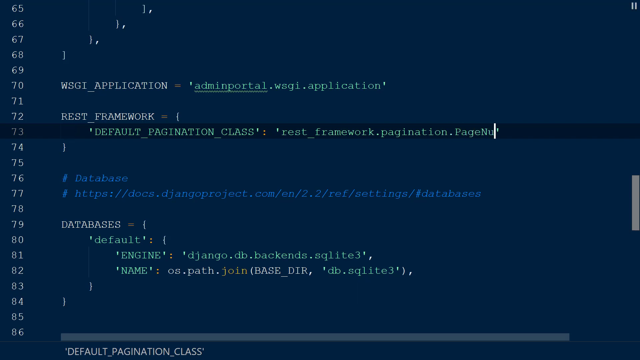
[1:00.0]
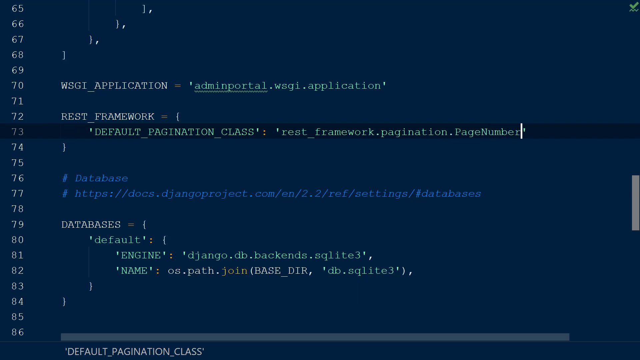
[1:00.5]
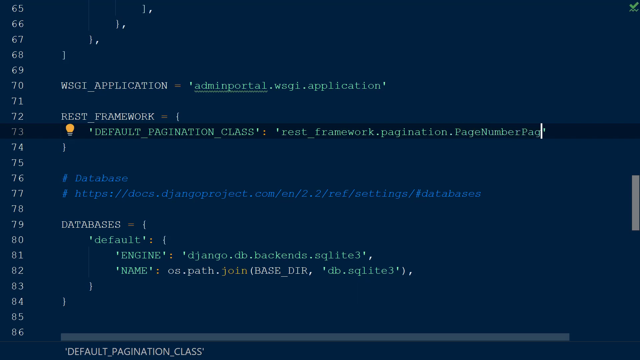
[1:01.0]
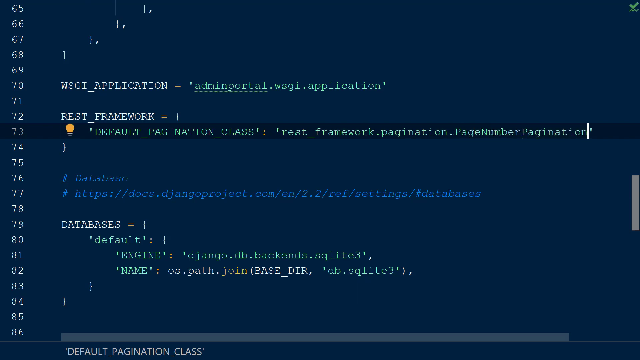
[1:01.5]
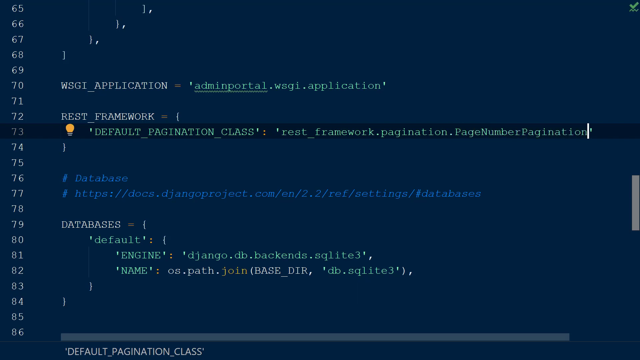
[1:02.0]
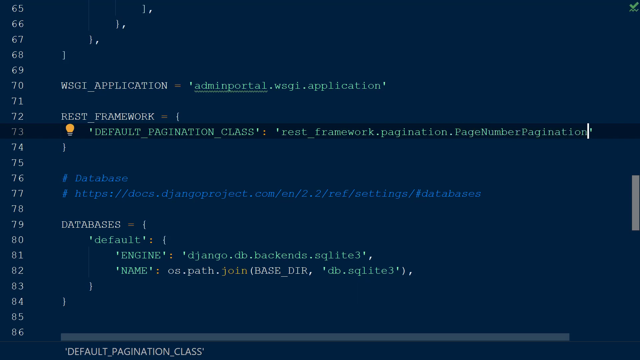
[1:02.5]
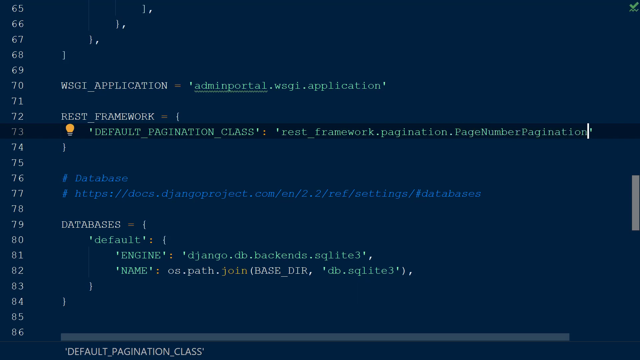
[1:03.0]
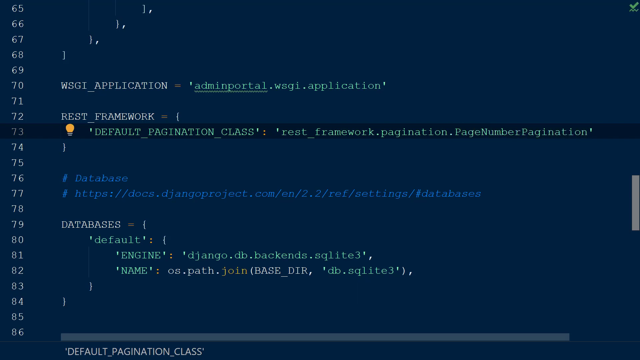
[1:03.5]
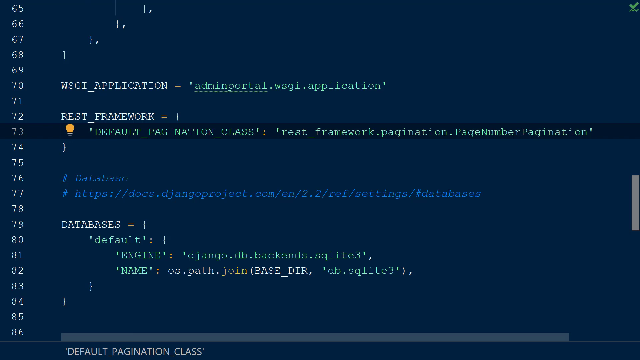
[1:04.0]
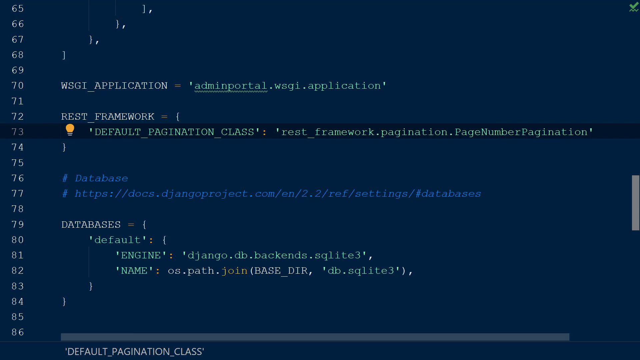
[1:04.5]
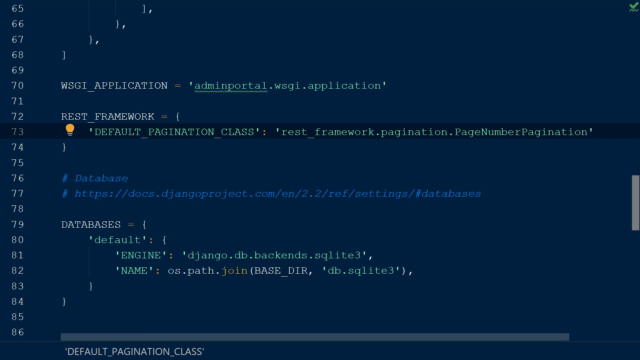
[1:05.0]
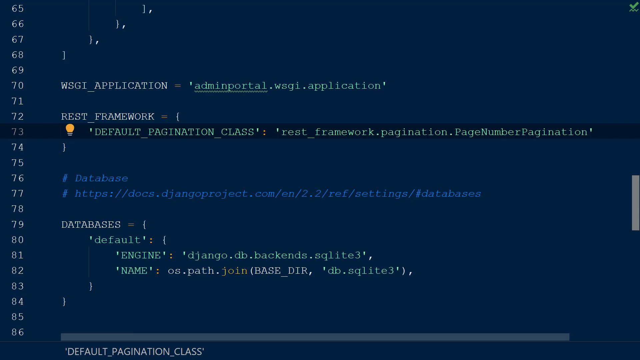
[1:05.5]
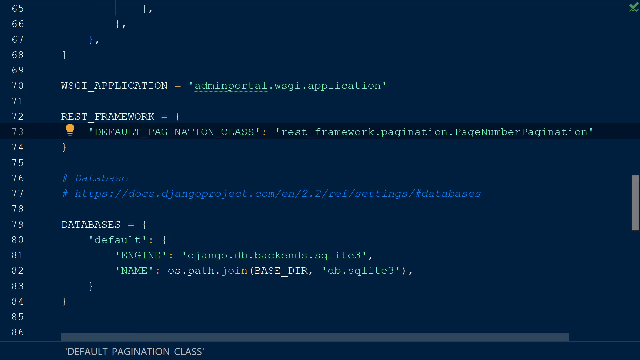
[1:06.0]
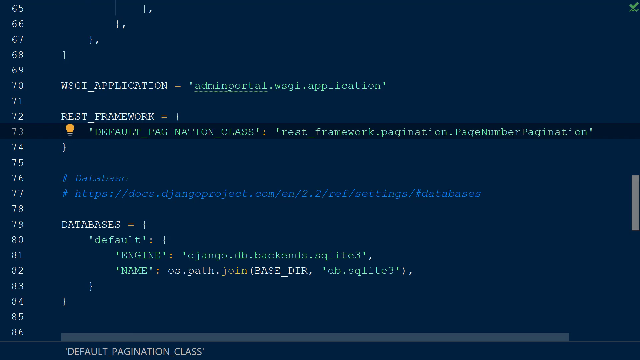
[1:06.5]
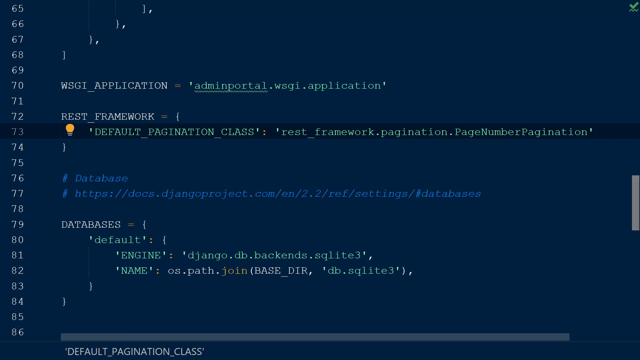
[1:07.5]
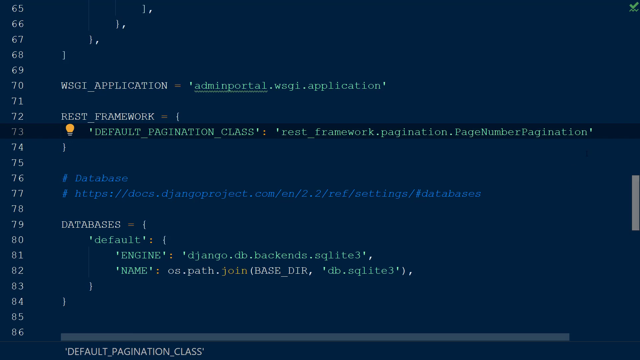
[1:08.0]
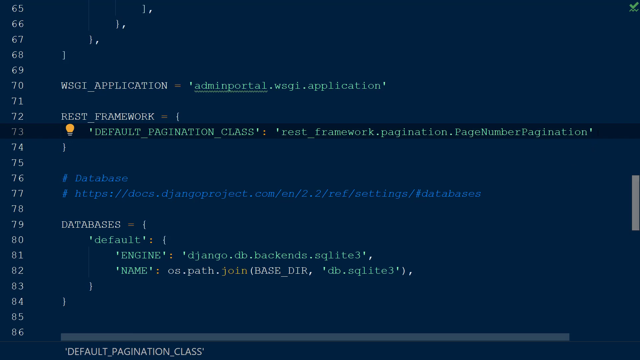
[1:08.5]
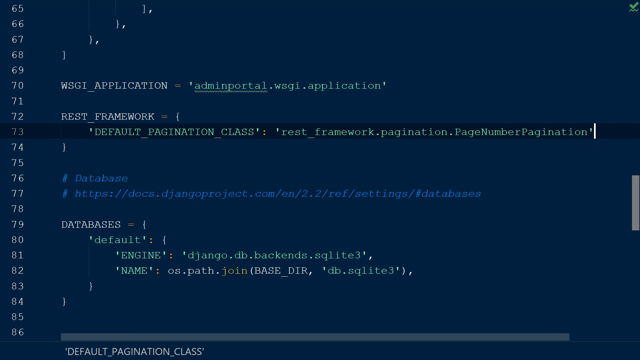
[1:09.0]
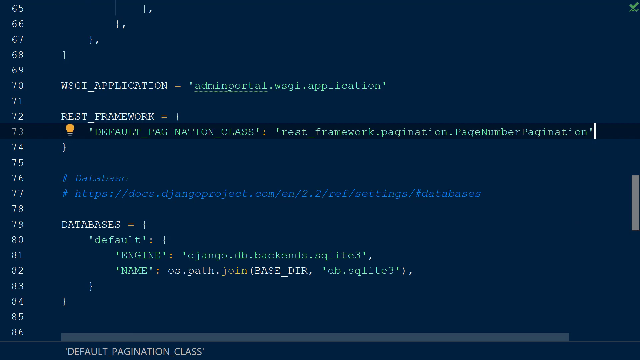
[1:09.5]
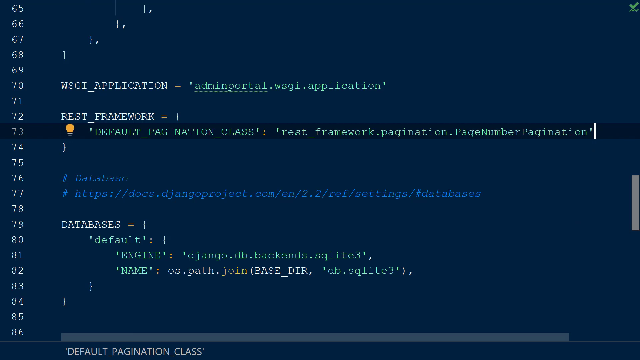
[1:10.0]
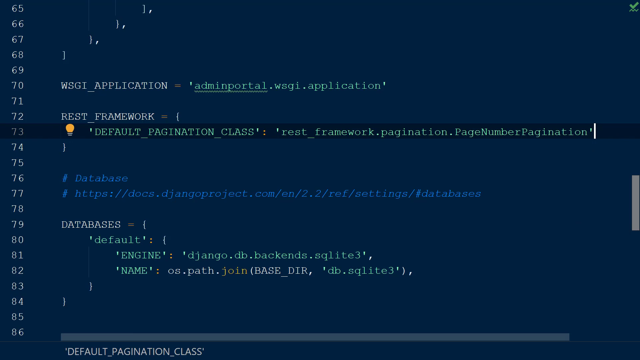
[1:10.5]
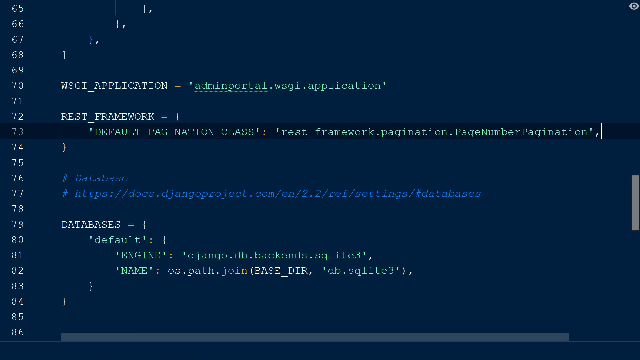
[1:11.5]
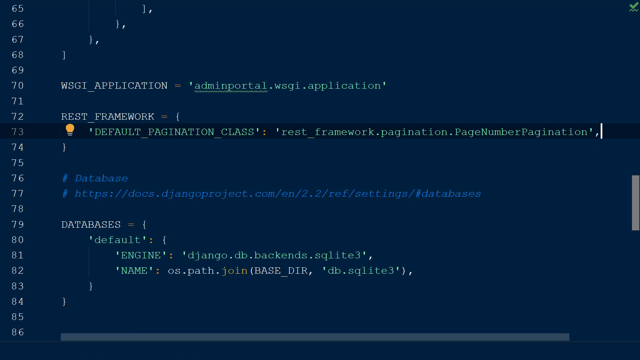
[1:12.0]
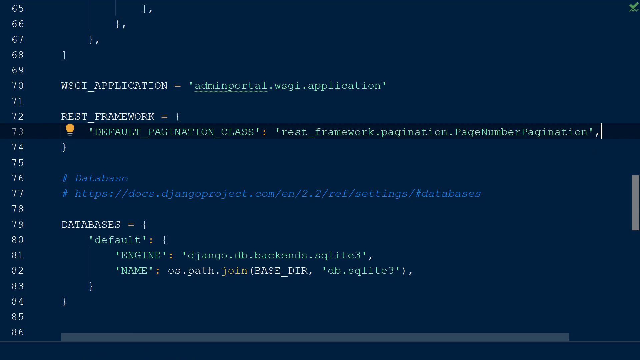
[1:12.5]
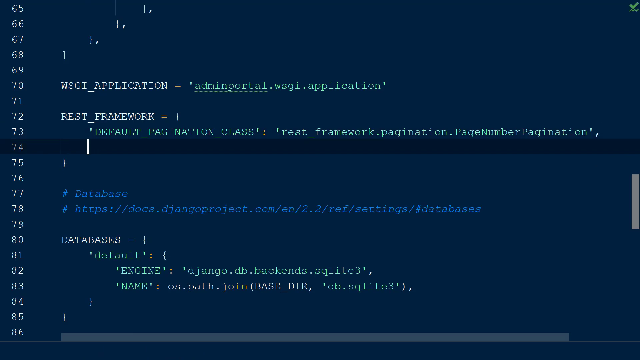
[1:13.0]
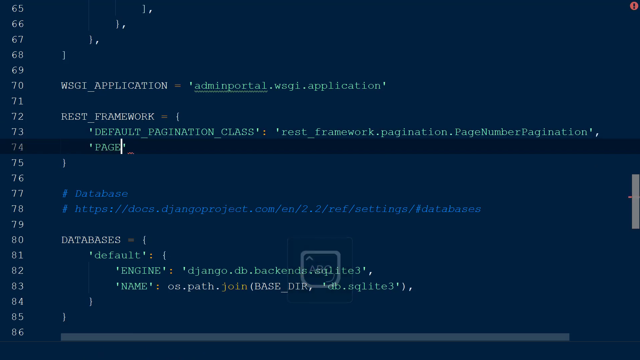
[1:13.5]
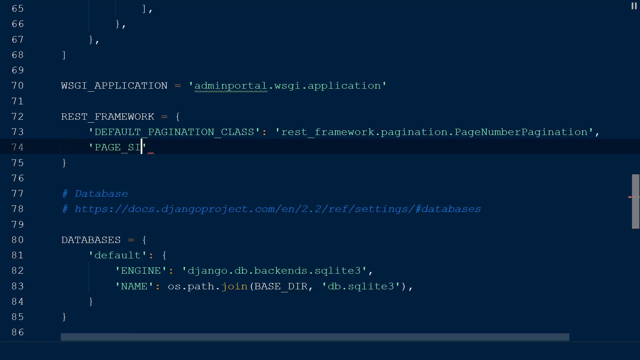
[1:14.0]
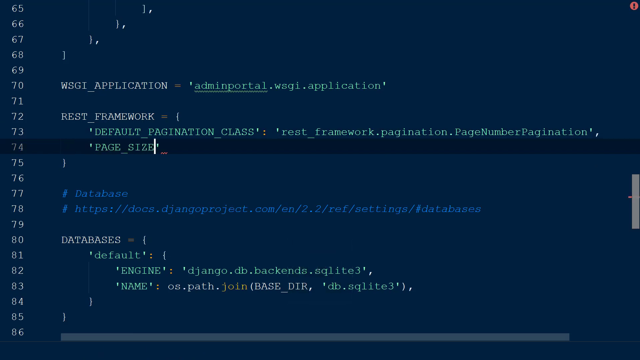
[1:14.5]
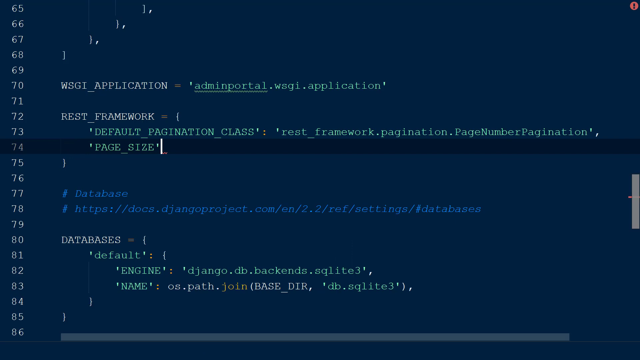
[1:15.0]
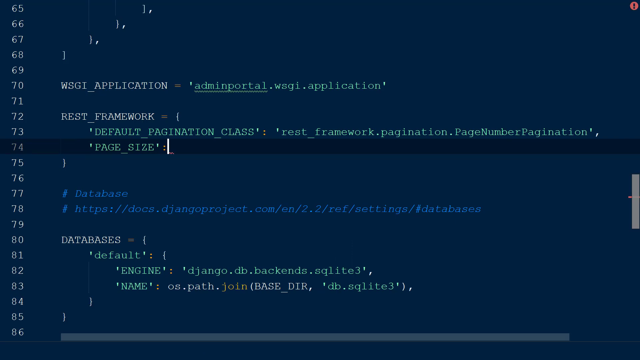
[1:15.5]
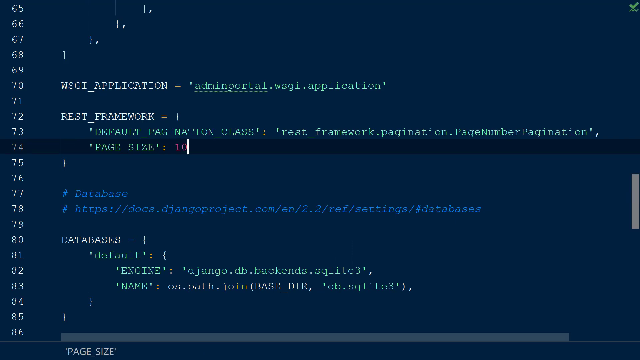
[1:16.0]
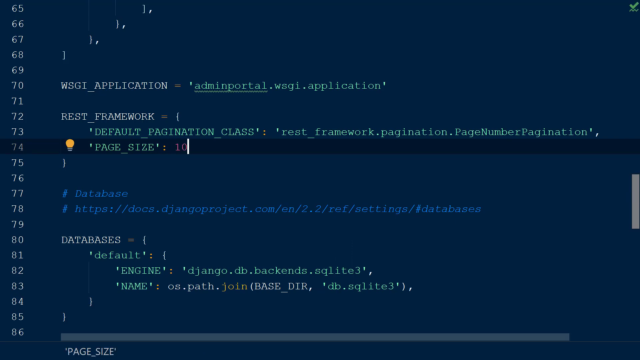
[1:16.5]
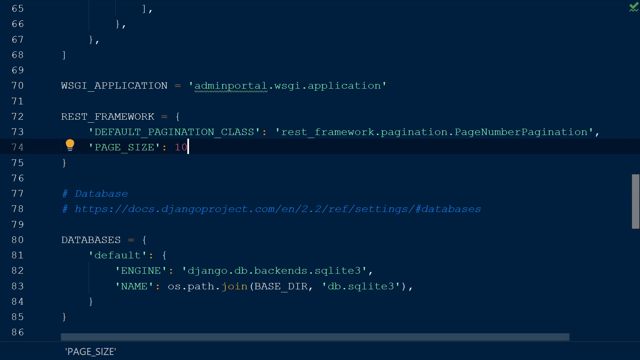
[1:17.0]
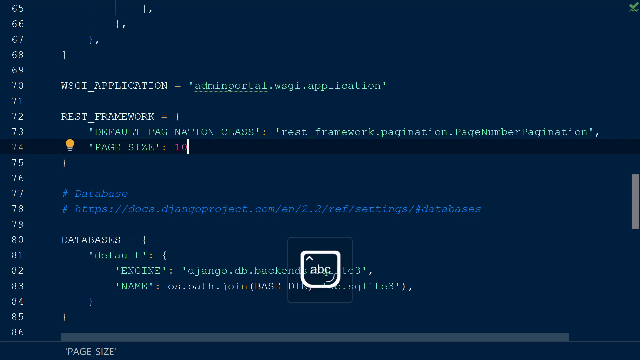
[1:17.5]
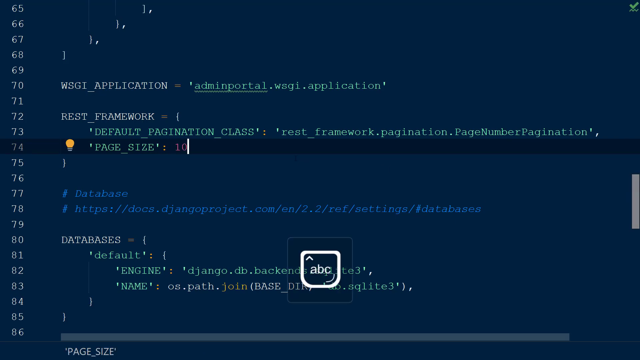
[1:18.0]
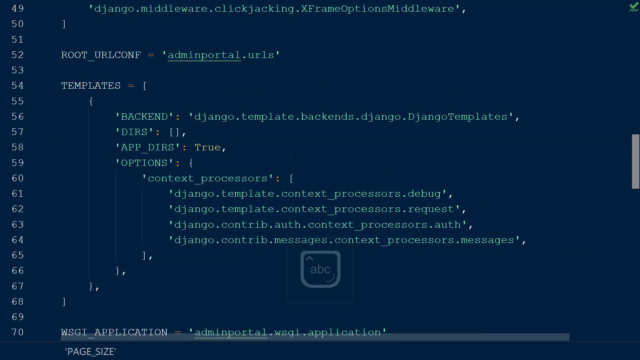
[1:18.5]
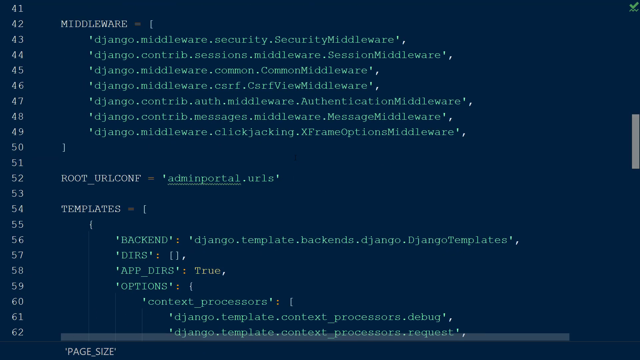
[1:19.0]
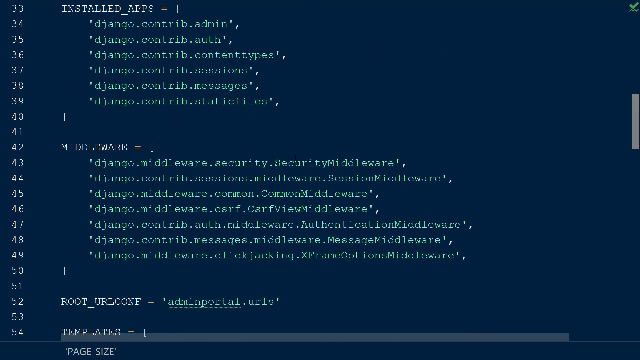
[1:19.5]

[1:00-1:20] The code being written reads "default_pagination_class" set to "rest_framework.pagination" page number pagination. On line 74, a "page_size" of 10 is written. Once that is done, the page loads and much more content appears: "root_urlconf" set to "adminportal.urls", templates with a backend beginning "django.template", "DIRS", "APP_DIRS" set to true, and options. There is also an installed apps section listing "django.contrib.admin", "django.contrib.auth", "django.contrib.contenttypes", "django.contrib.sessions", "django.contrib.messages" and "django.contrib.staticfiles", followed by middleware, including "django.middleware.security.securitymiddleware".